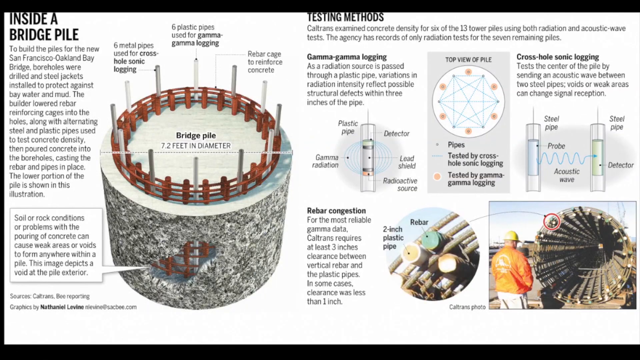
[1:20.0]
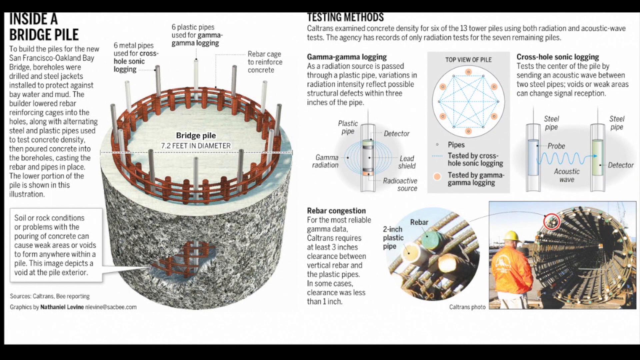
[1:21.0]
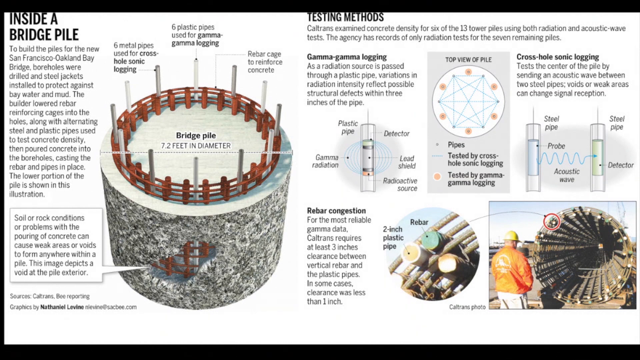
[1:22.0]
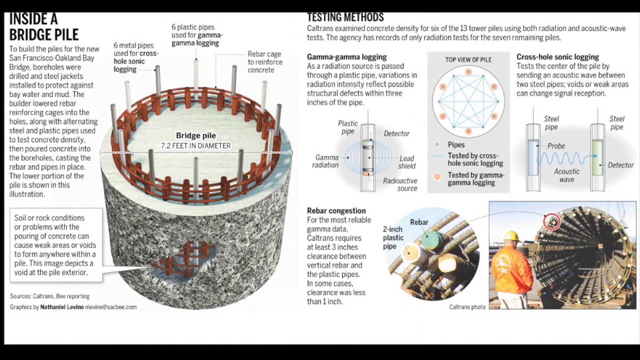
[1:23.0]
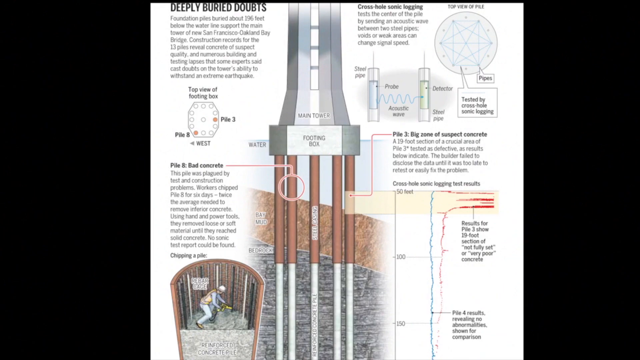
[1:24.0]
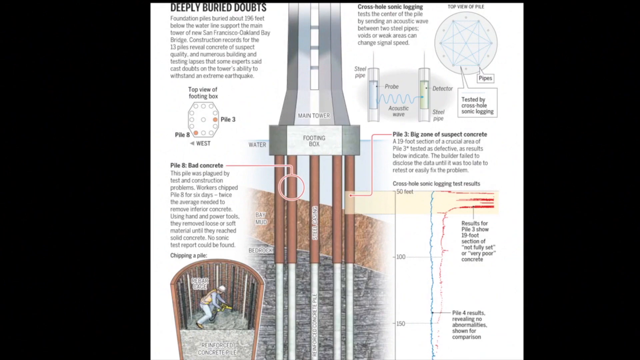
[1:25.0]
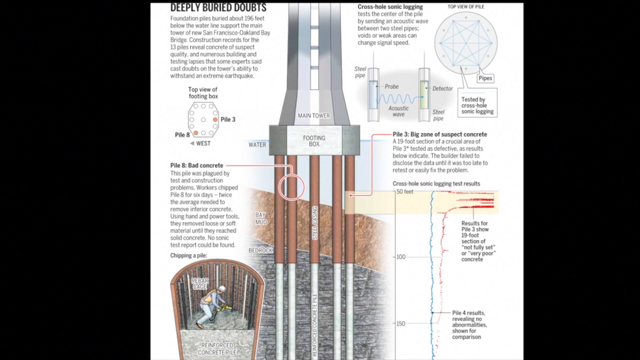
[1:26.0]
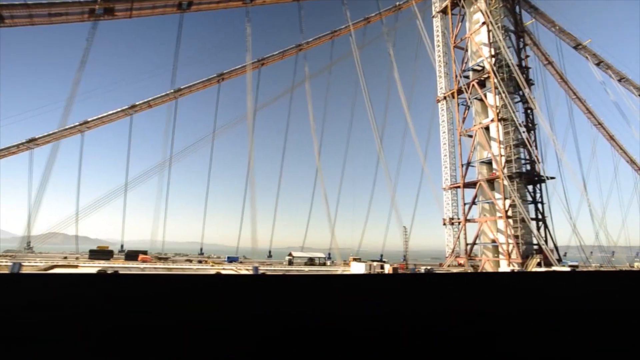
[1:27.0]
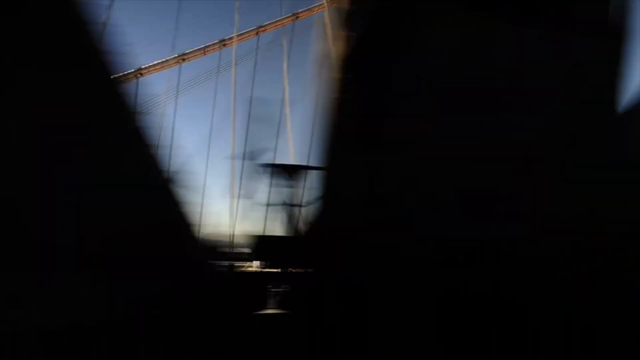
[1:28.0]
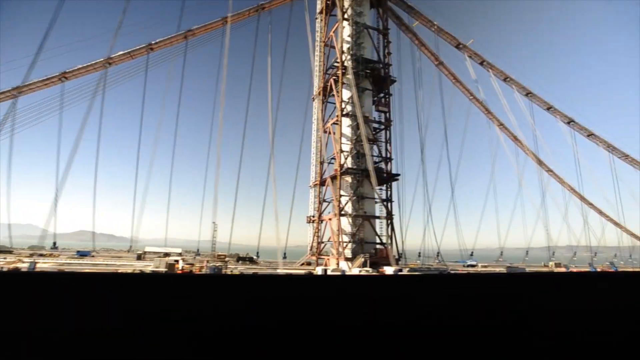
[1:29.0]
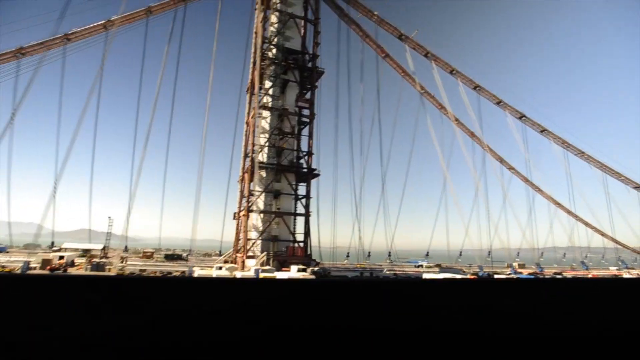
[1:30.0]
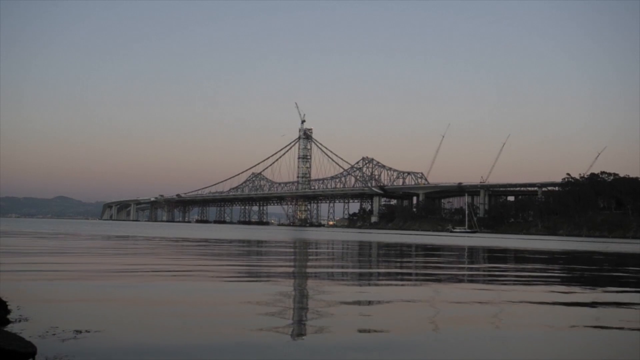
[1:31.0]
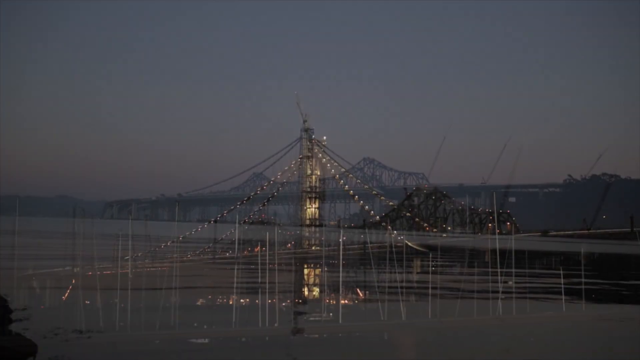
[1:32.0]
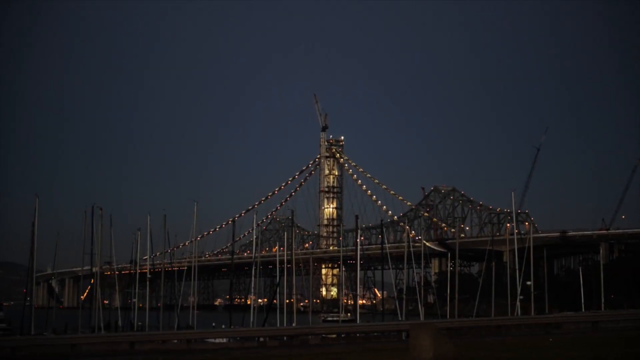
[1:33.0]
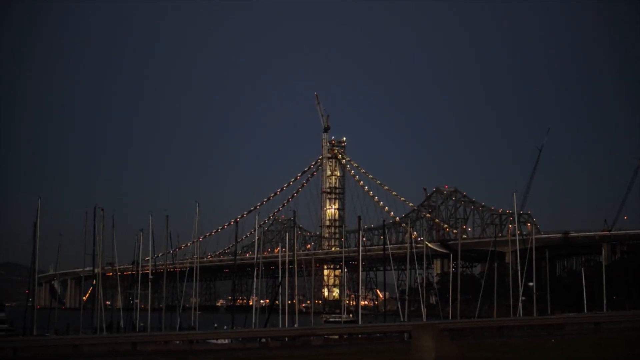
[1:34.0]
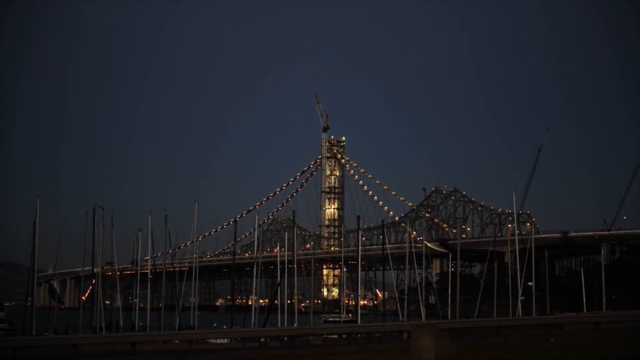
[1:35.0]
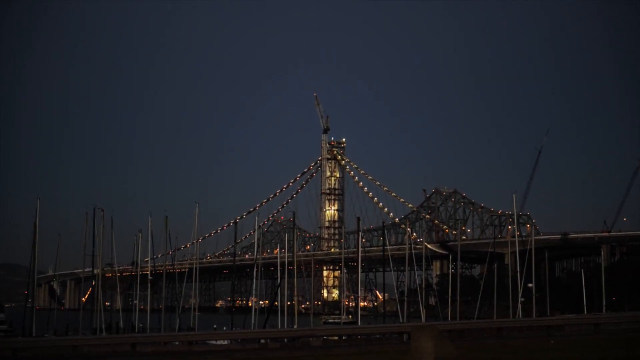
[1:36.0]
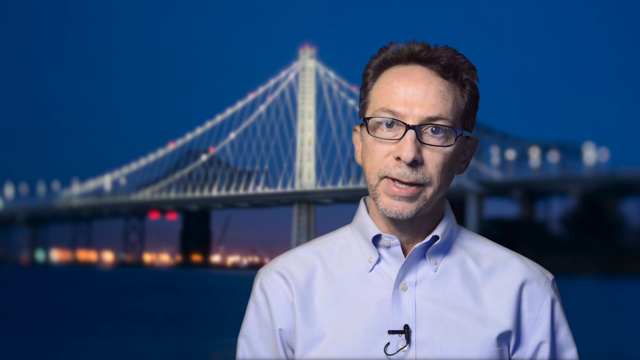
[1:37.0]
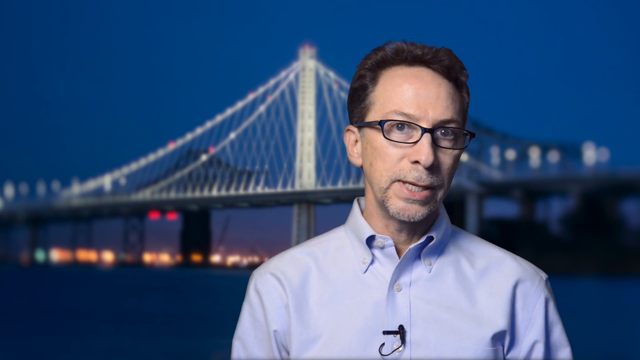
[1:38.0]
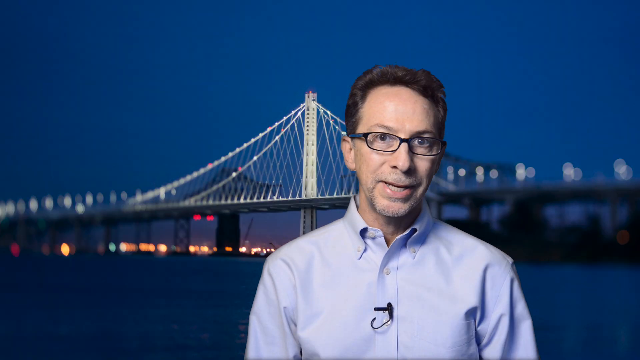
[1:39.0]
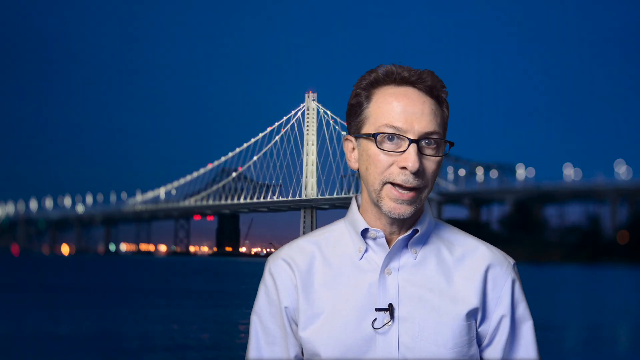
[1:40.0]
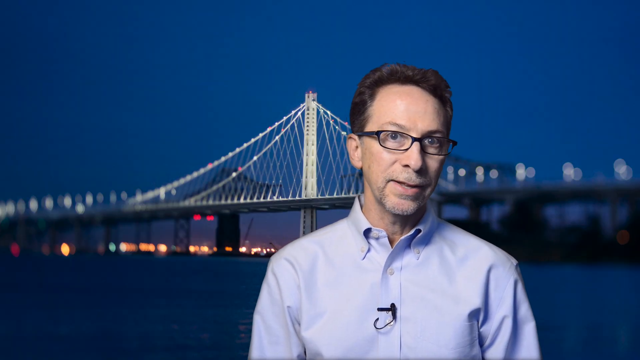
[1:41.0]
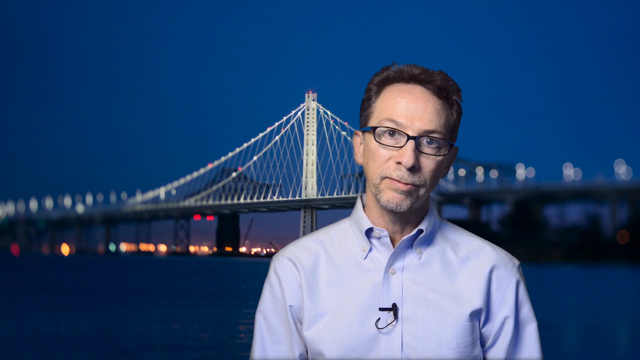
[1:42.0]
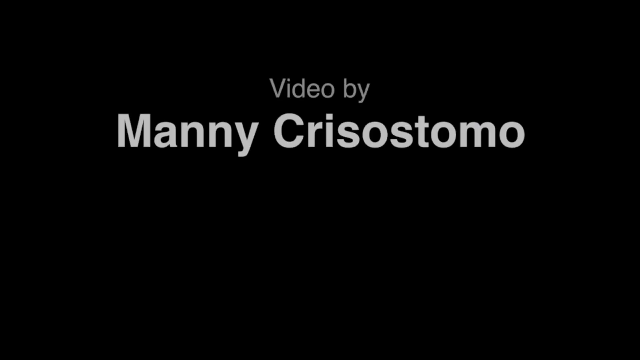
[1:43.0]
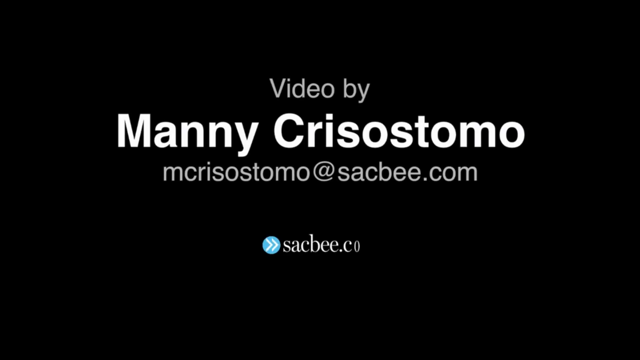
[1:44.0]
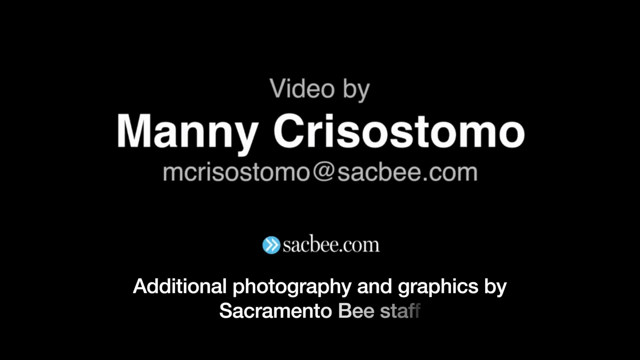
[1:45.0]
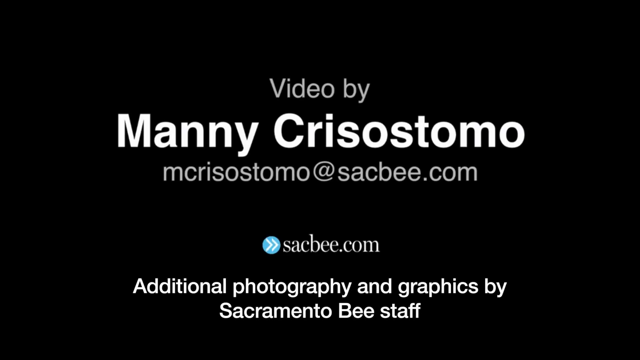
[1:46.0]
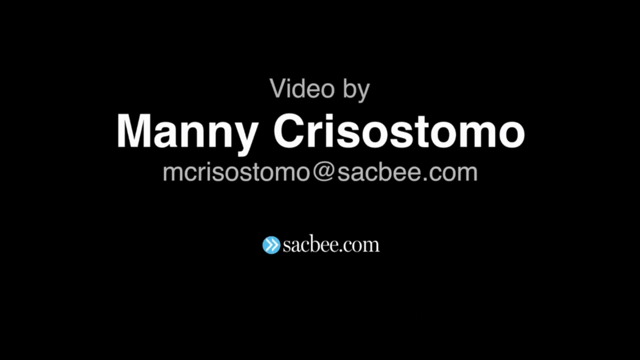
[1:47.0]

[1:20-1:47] A newspaper clipping shows a drawing of a bridge pile that looks like a concrete cylinder, gray, with a ring of red posts going around its top. In the top left is the title "inside a bridge pile," with text underneath. On the lower right side is a picture of a man wearing an orange jacket, a yellow construction hat and khaki pants, standing in front of what looks like a ring of metal poles, which looks like a tunnel. To the left is another picture in a circle, a close-up of the ends of rebar in two plastic pipes sitting between horizontal poles. Above this are diagrams of the top of the pile, with two vertical plastic pipes on the left and right sides and a diagram for each pipe. The view moves to a different newspaper clipping that appears to show a diagram of the concrete section beneath a bridge, the part that goes into the water. Five metal bars, or metal poles, go from the bottom of this concrete pillar down through the water to the ground beneath it. In the top left are the words "deeply buried doubts." At the bottom, a construction worker wearing an orange construction vest and a white construction hat is in what looks like a cylinder cut in half; he is bending over and looks to be drilling. In the bottom right is what looks like a graph, starting at 50 feet at the top and going down to 150 feet at the bottom, with a 100 feet mark in the middle. A squiggly blue vertical line runs from the bottom of the graph to the top, and to its right a red squiggly line also runs from bottom to top but curves to the right near 50 feet. Then a video of the San Francisco-Oakland Bay Bridge span appears to be taken from on the bridge: a large white pillar surrounded by construction bars and construction beams moves from right to left as the car moves past it. Red suspension cables are attached to the top of the tower and go down, and vertical cables attached to the suspension lines go down to the bridge. Next is a shot of the bridge from afar that looks like it is taken from the shore at dusk, followed by a picture of the bridge at night, still from the shore. The white tower is illuminated, and the suspension cables attached to the tower have dotted lights running up and down them. The video goes back to a man who appears to be in his early 40s, wearing glasses and a blue button-up shirt, seen from the chest up. He is sitting in front of a picture of the San Francisco-Oakland Bay Bridge span showing the finished white tower at the center of the bridge and white suspension cables going from the top of the tower to the bottom of the bridge; the picture seems to have been taken at night. He talks while looking directly at the camera. A black screen follows with the text "video by Manny Cristostomo," then an email address for this person, mcristostomo at sacbee.com, and below it the website sacbee.com. To the left is a blue circle with two white arrows pointing to the right. At the bottom is the sentence "additional photography and graphics by Sacramento Bee staff."